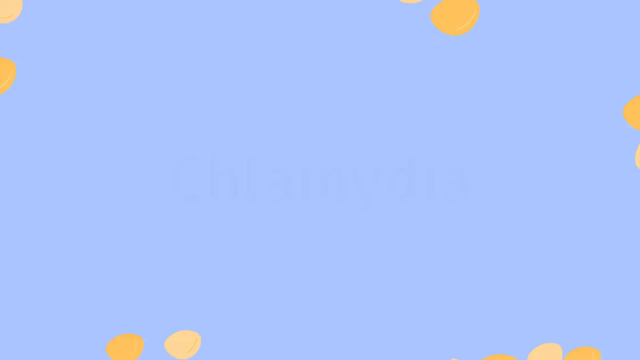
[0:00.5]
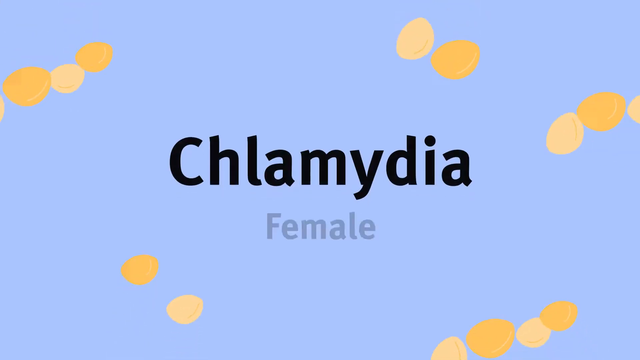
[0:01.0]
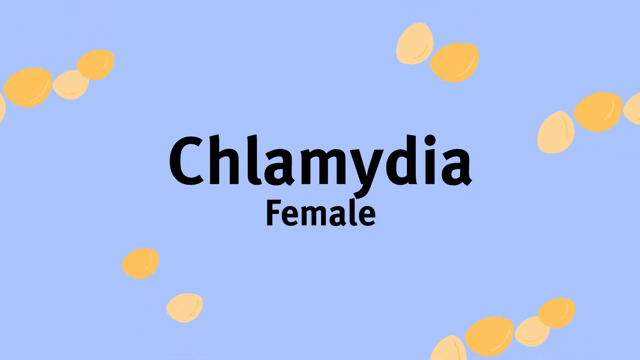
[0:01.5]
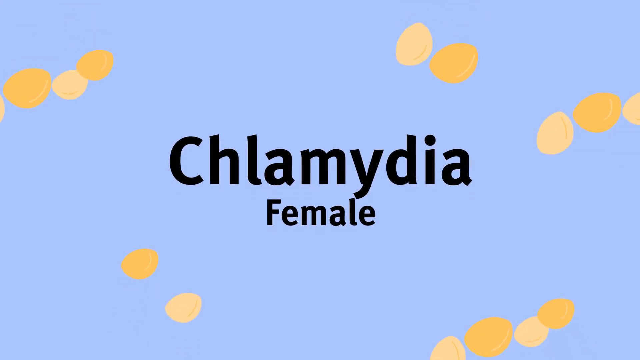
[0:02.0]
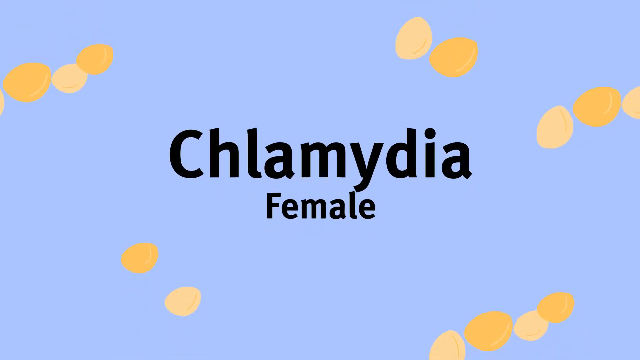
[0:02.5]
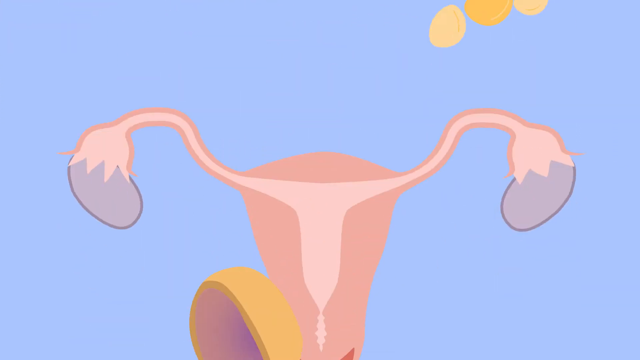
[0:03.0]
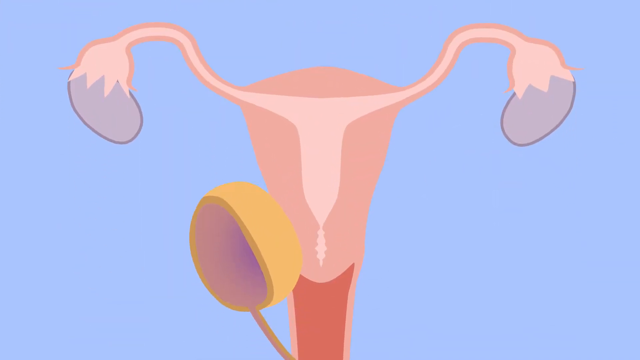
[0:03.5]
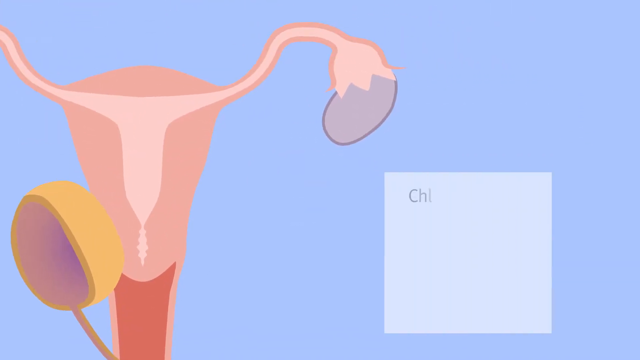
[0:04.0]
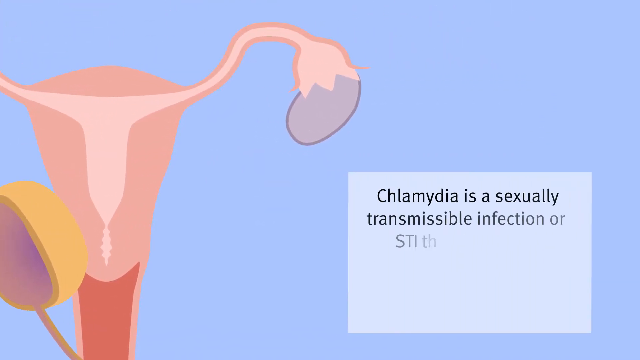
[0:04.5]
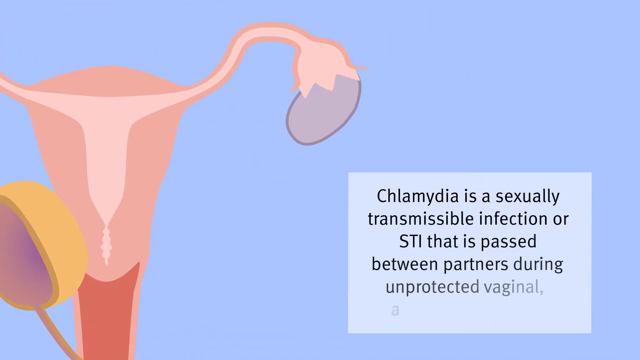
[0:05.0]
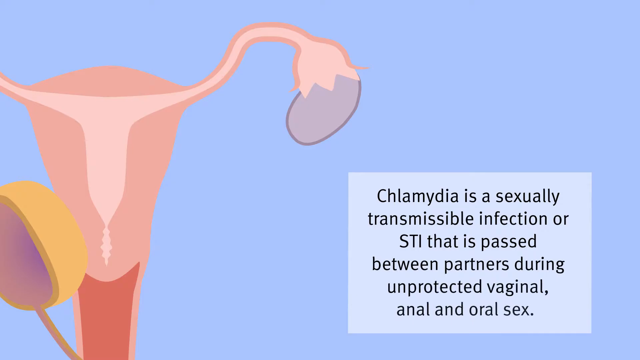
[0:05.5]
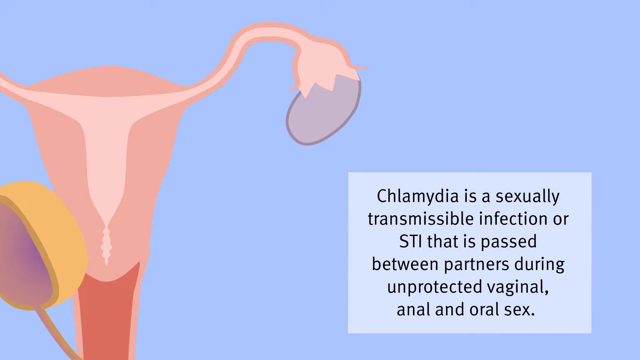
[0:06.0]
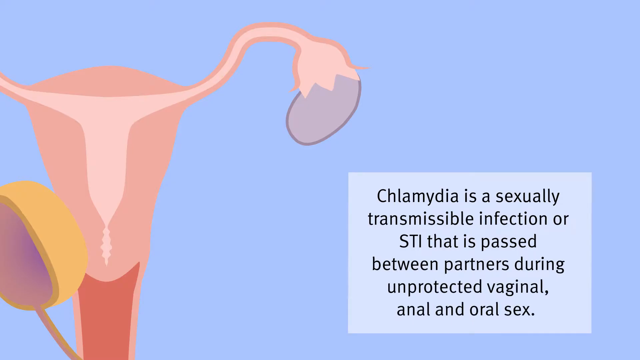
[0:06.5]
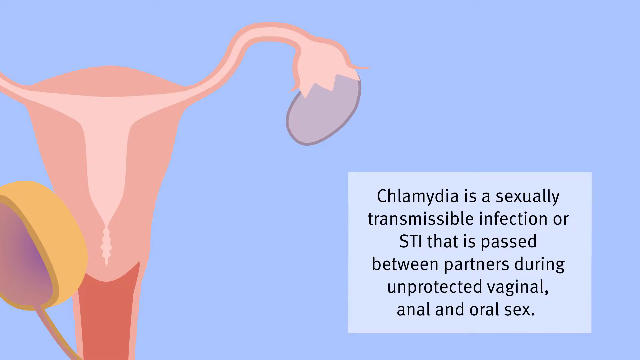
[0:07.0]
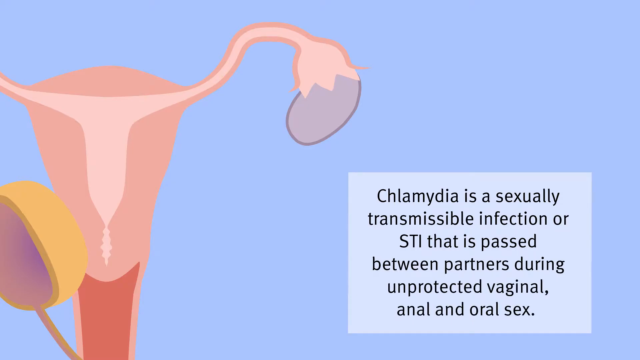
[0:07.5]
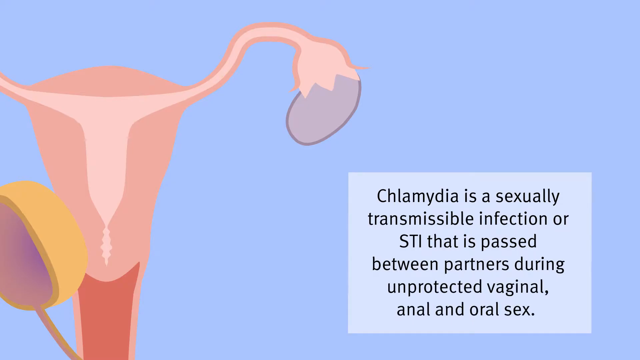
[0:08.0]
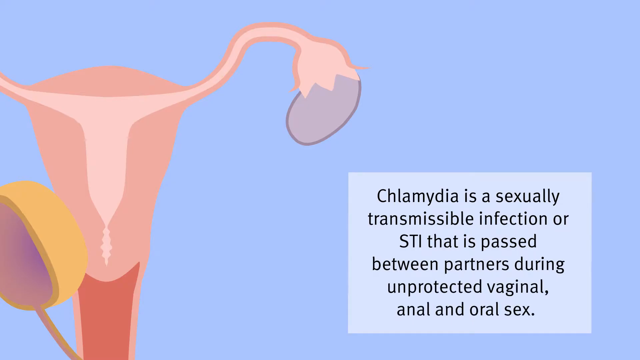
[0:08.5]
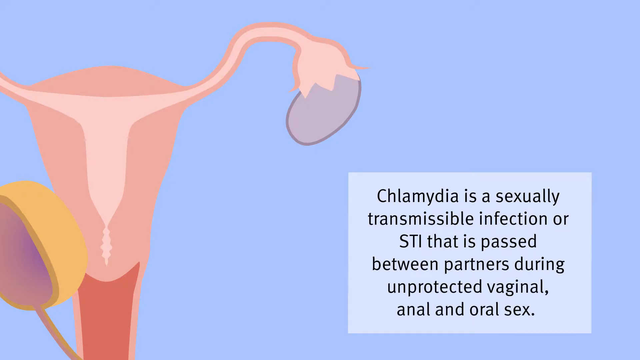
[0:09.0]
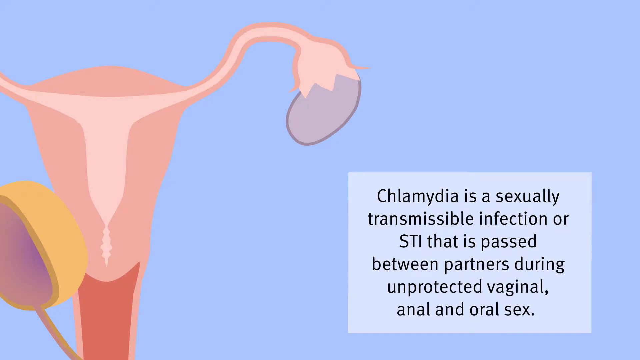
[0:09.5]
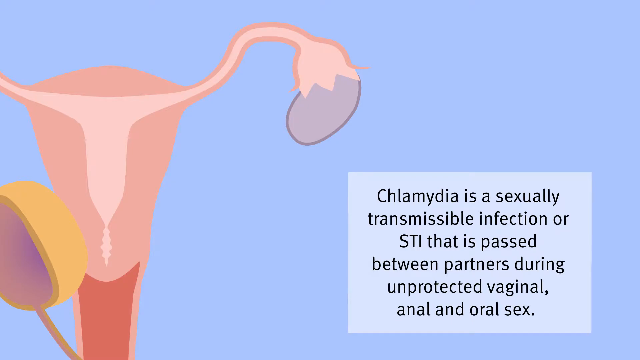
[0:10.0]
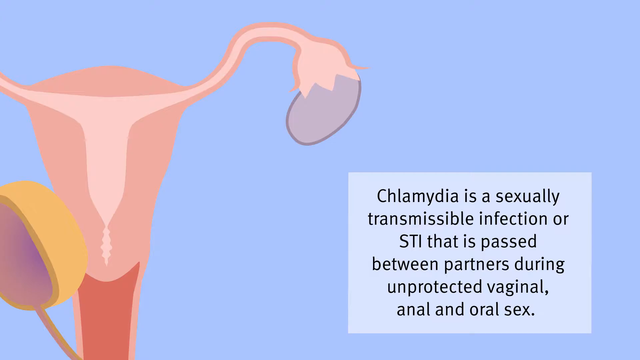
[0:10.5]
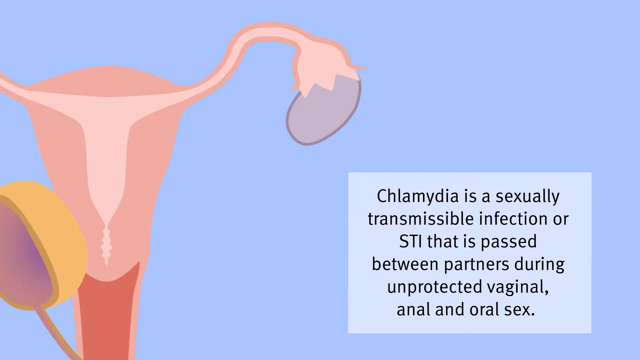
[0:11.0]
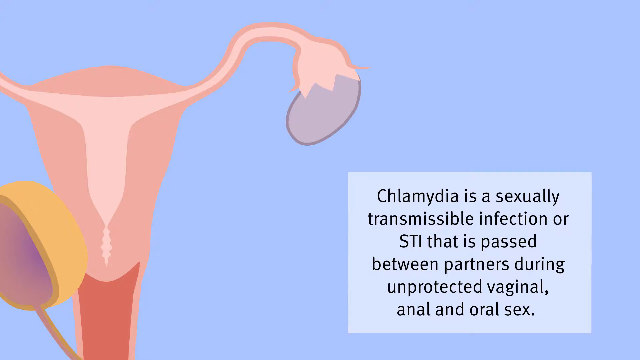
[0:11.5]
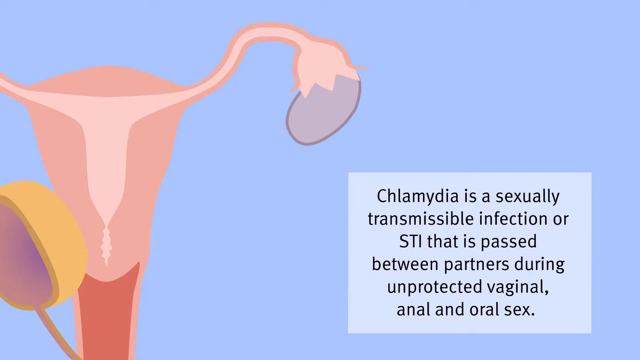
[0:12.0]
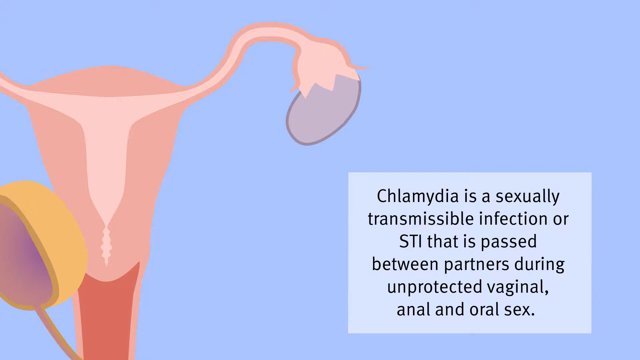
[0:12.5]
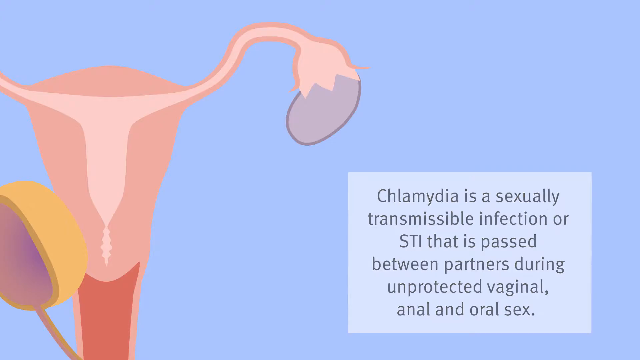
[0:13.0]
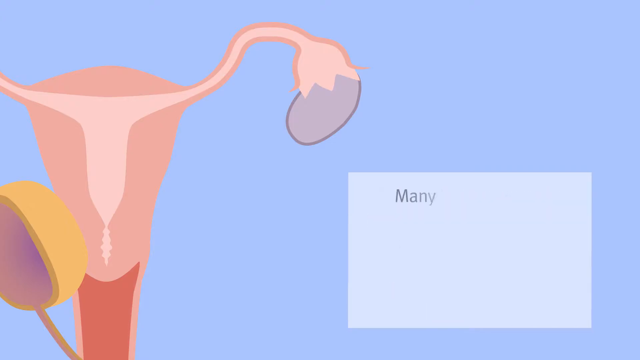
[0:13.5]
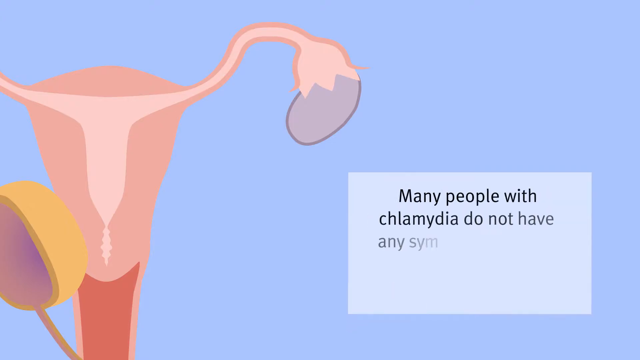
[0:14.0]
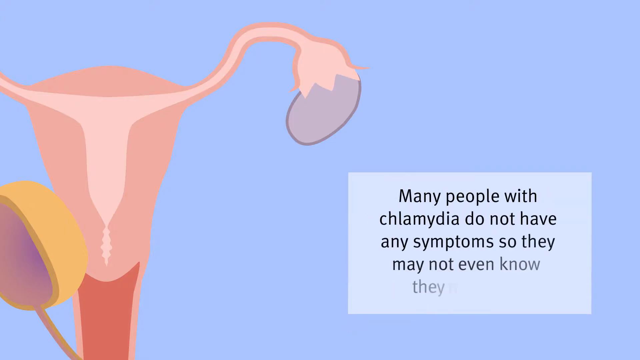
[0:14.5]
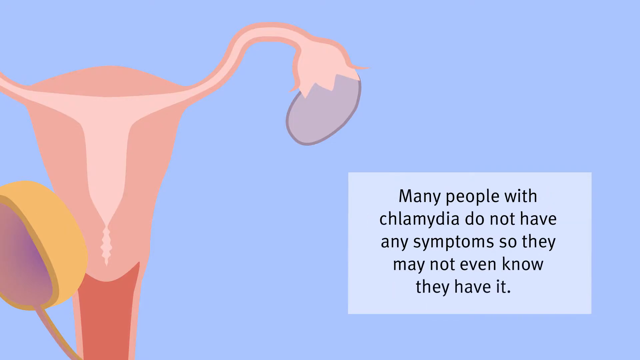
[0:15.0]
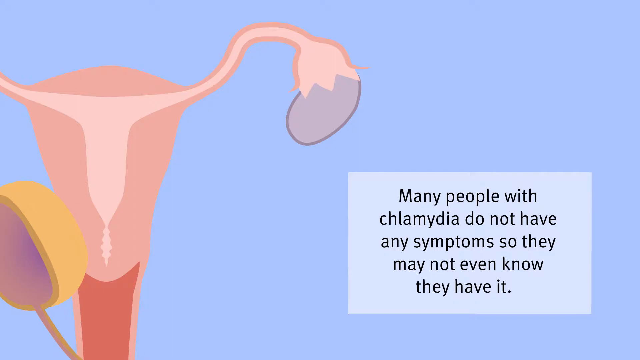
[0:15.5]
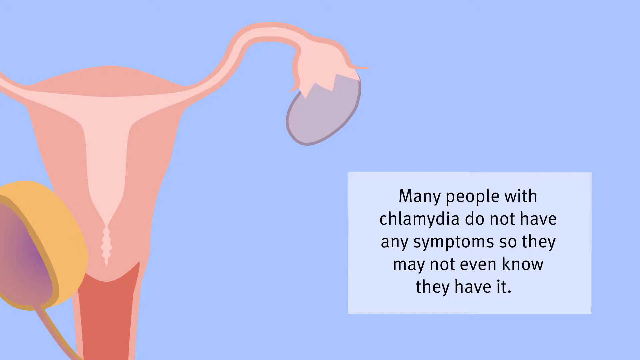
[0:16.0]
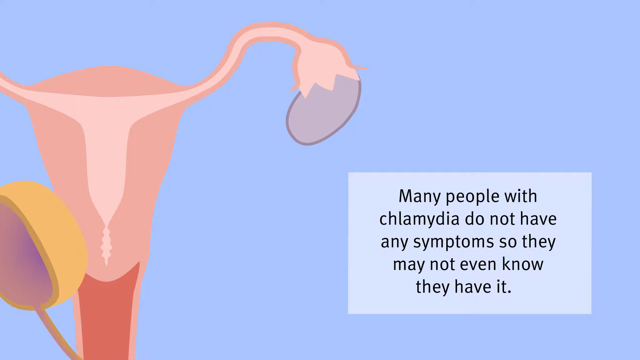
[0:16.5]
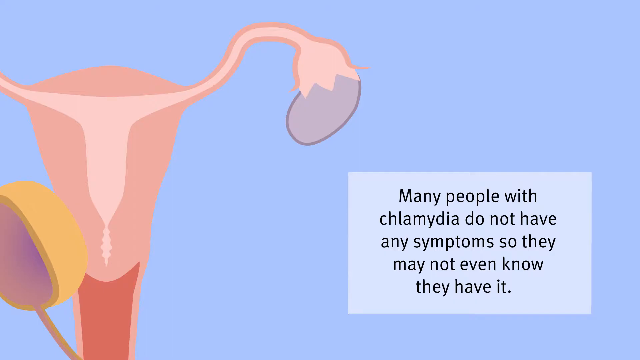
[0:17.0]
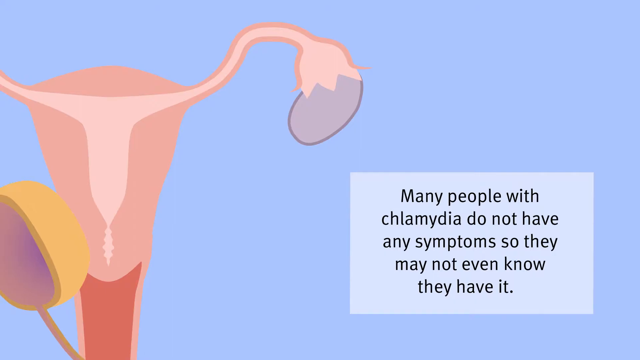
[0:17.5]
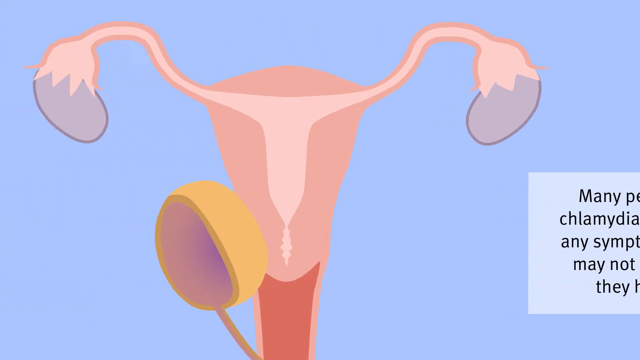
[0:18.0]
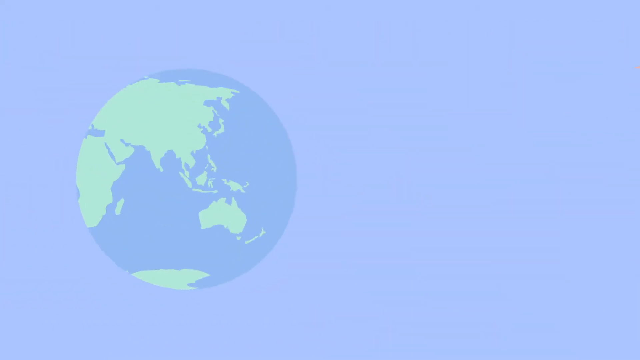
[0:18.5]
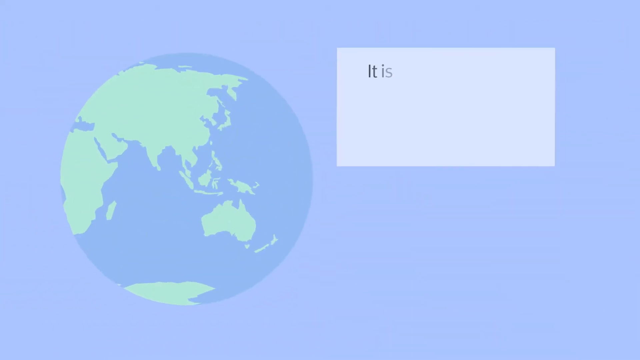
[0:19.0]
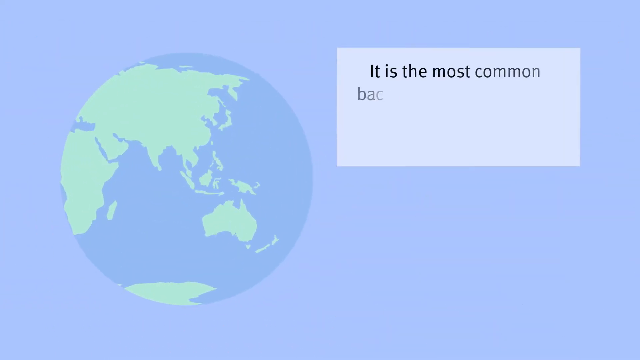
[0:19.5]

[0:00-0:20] The video, called Chlamydia Female, opens on a blue background with gold and yellow shapes floating around; they sort of look like smashed circles or kind of like seeds. Suddenly a computer-drawn cartoon of a woman's reproductive tract appears, apparently with a bladder in front of it. In a light gray box at the bottom right, text reads "chlamydia is a sexually transmissible infection or STI that is passed between partners during unprotected vaginal anal and oral sex." The background is light blue. The gray box also reads "Many people with chlamydia do not have any symptoms so they may not even know they have it." The whole picture then moves off to the right, and a map of the globe appears, with words to the right that go by very fast before stopping.